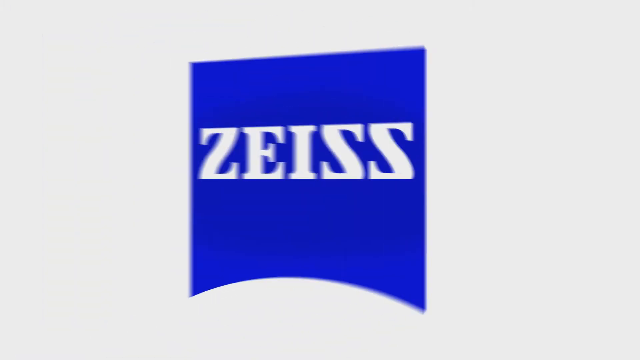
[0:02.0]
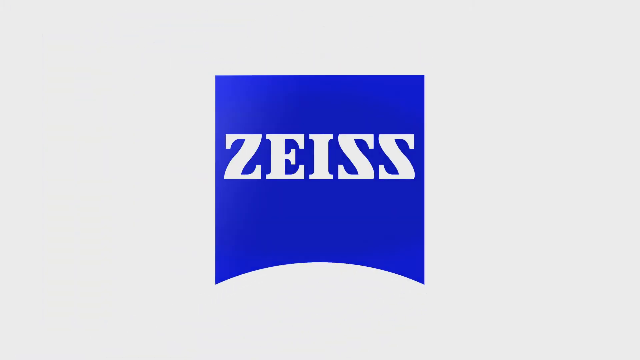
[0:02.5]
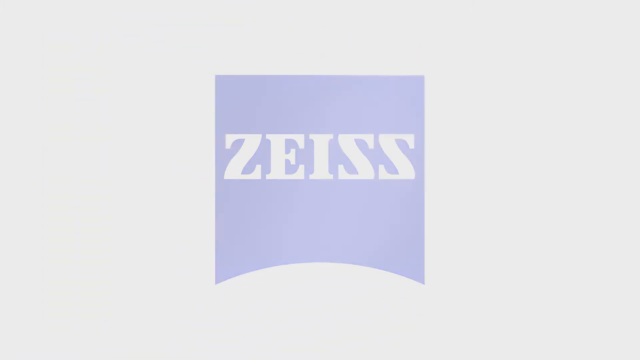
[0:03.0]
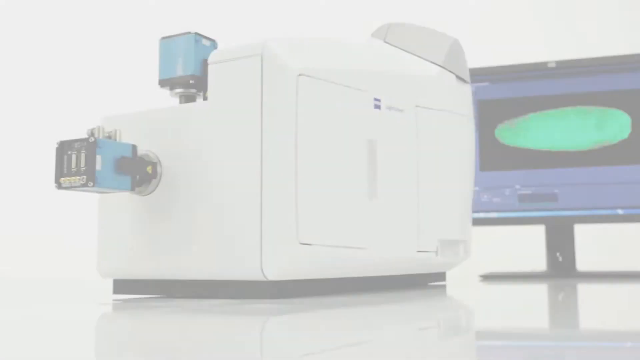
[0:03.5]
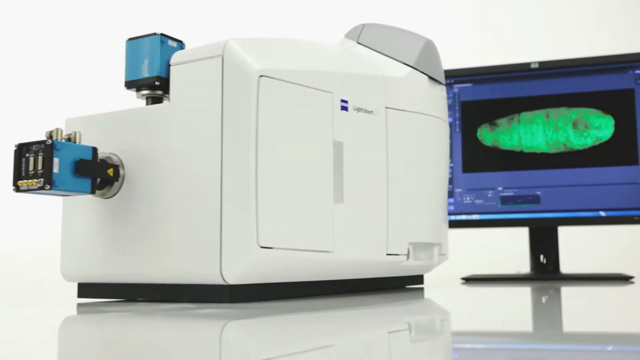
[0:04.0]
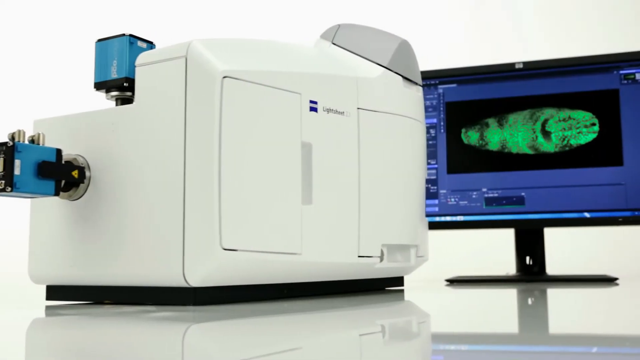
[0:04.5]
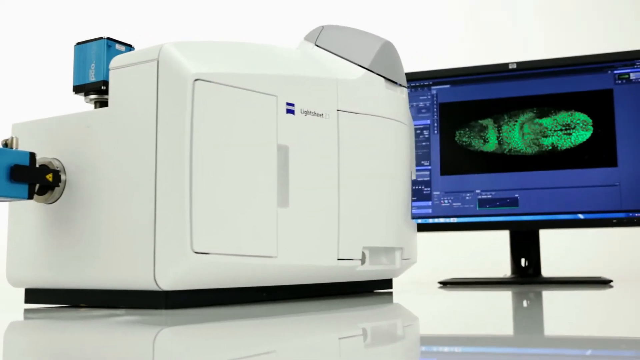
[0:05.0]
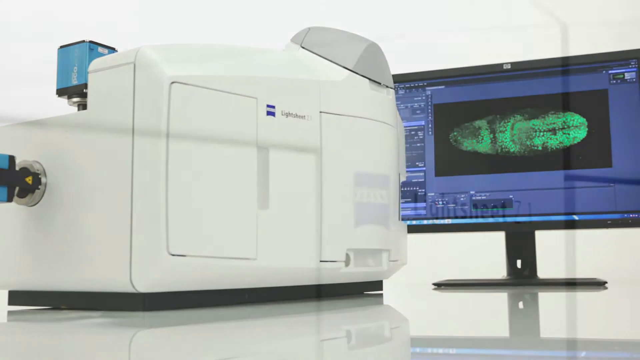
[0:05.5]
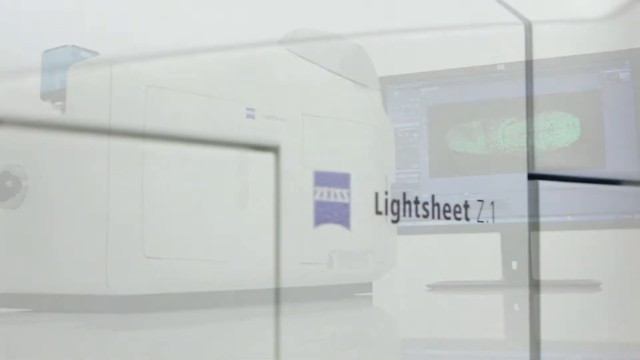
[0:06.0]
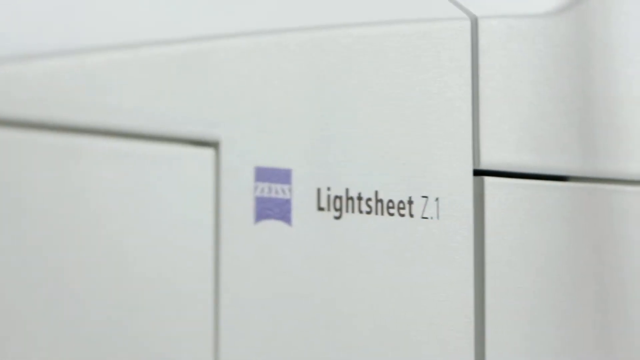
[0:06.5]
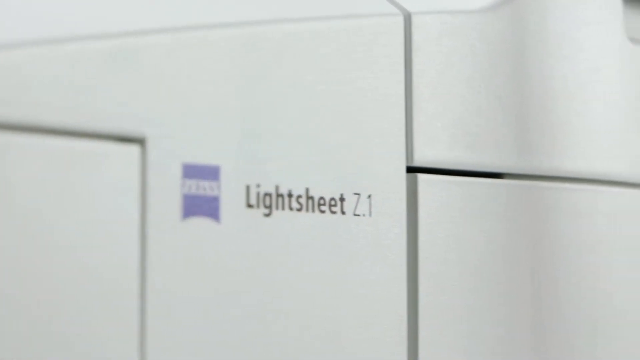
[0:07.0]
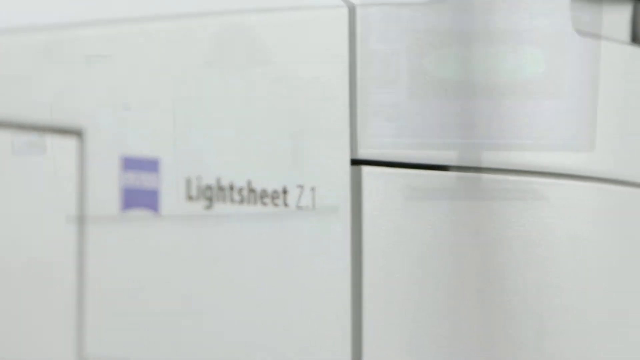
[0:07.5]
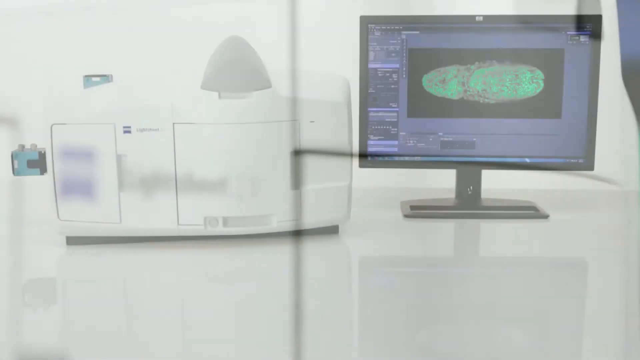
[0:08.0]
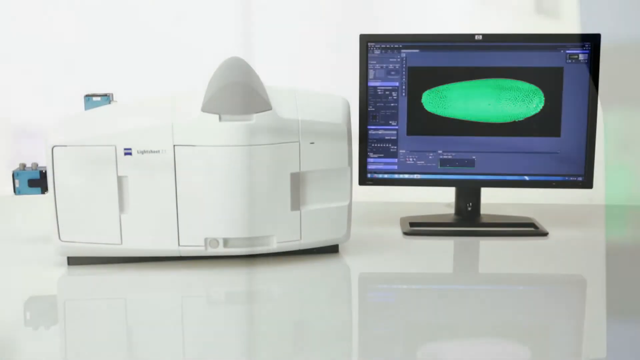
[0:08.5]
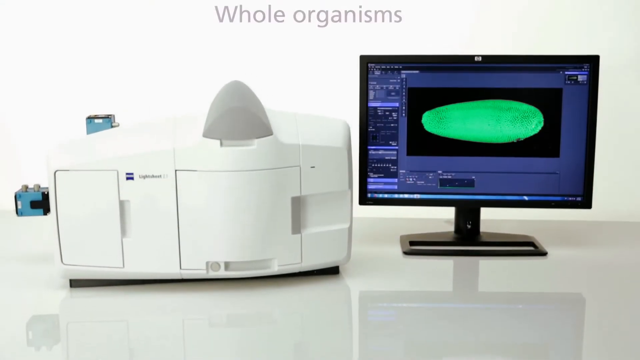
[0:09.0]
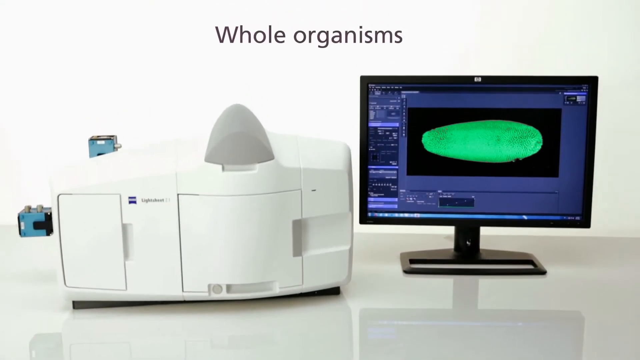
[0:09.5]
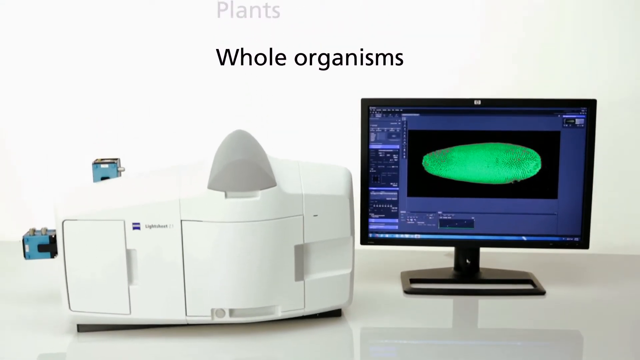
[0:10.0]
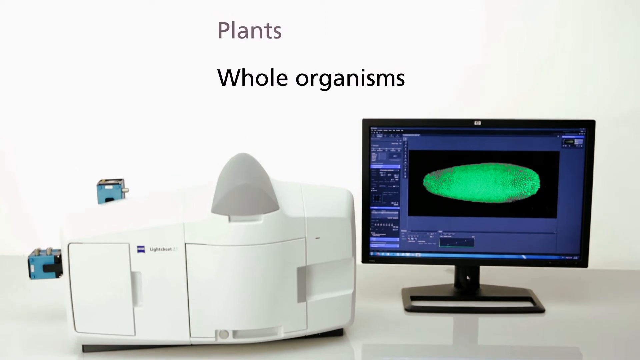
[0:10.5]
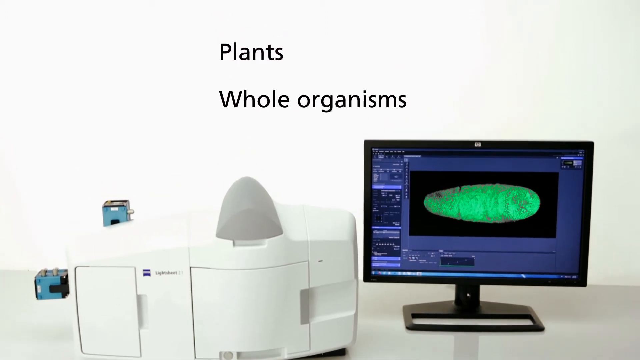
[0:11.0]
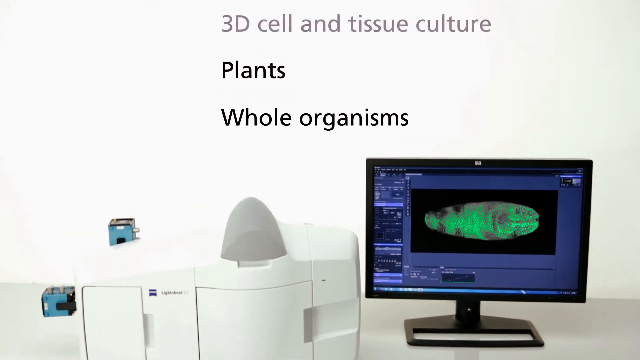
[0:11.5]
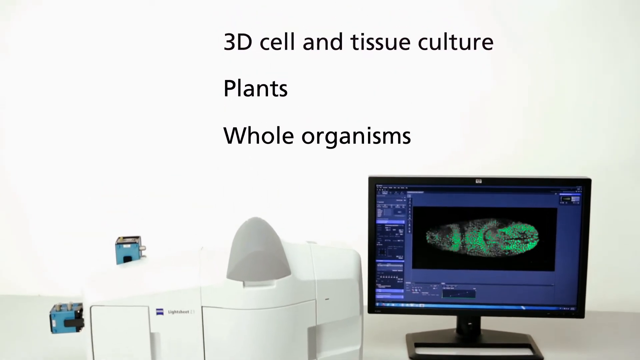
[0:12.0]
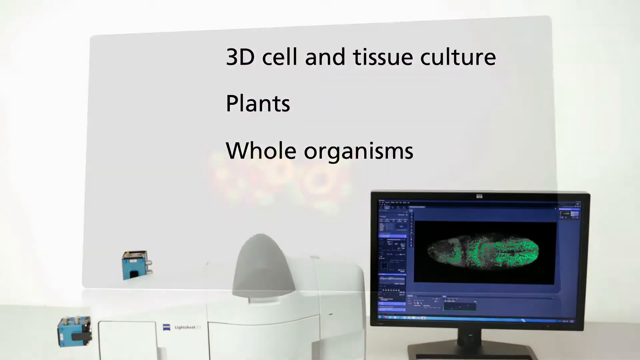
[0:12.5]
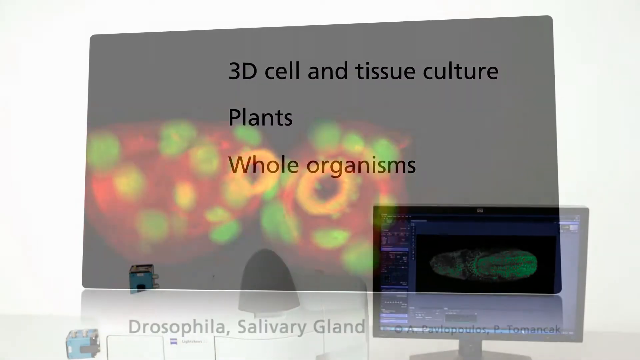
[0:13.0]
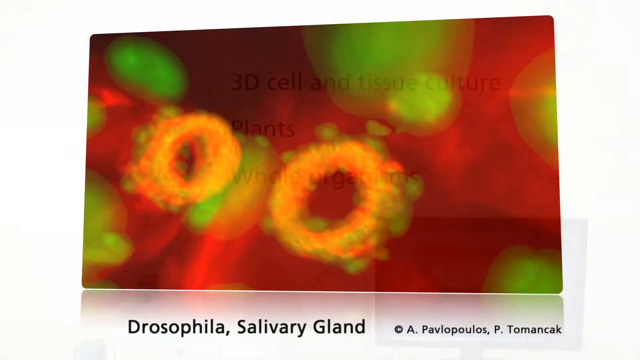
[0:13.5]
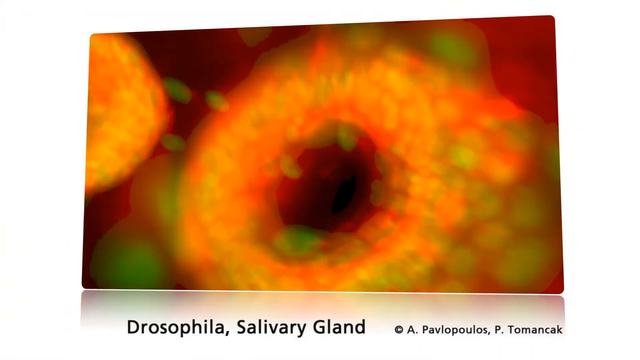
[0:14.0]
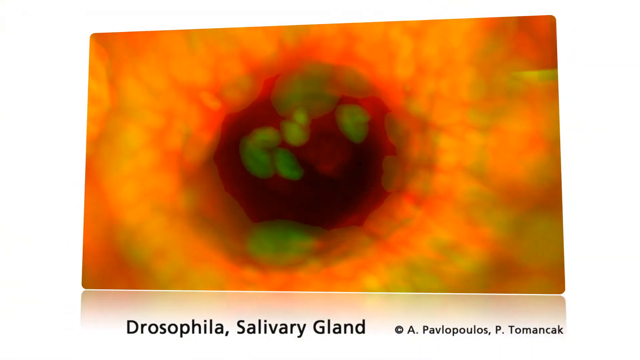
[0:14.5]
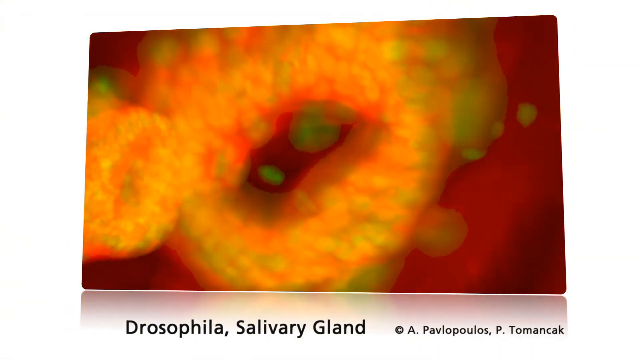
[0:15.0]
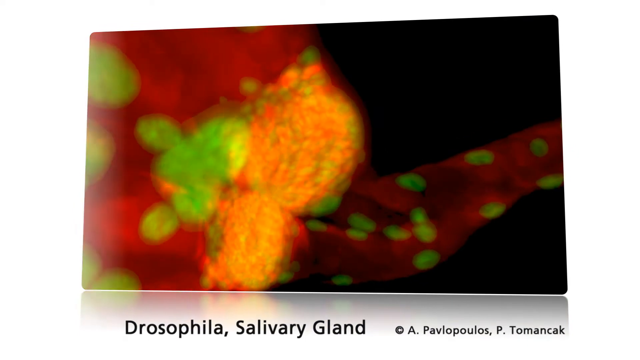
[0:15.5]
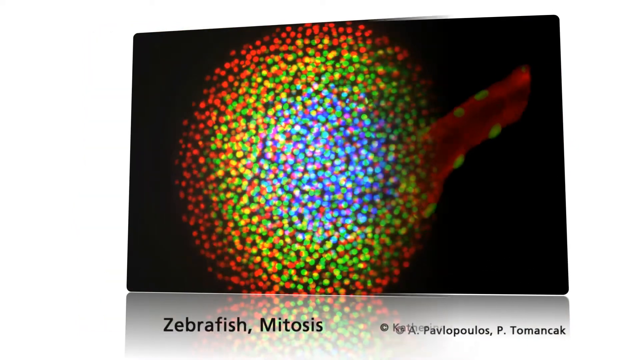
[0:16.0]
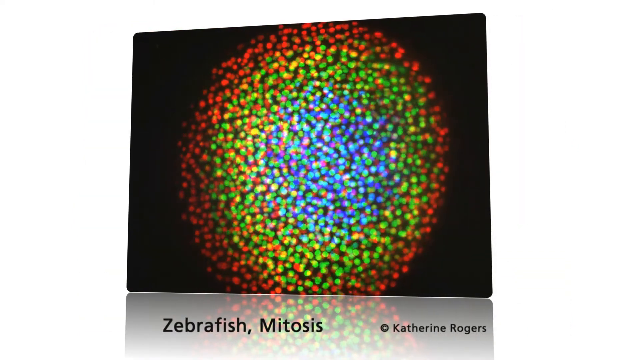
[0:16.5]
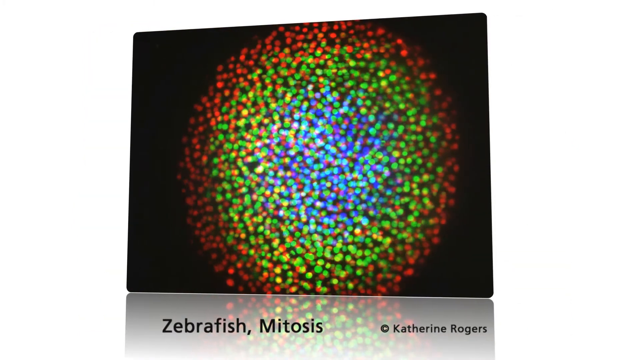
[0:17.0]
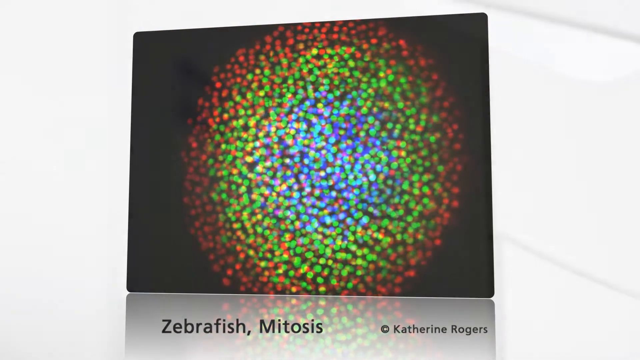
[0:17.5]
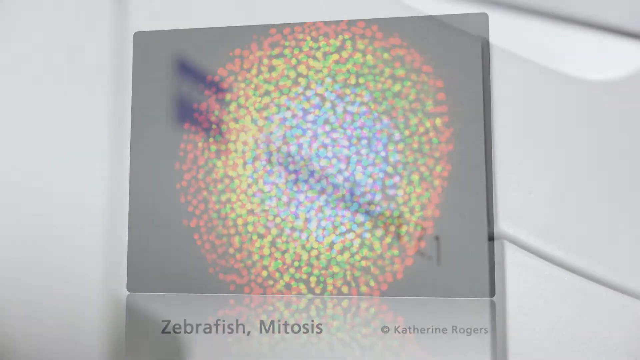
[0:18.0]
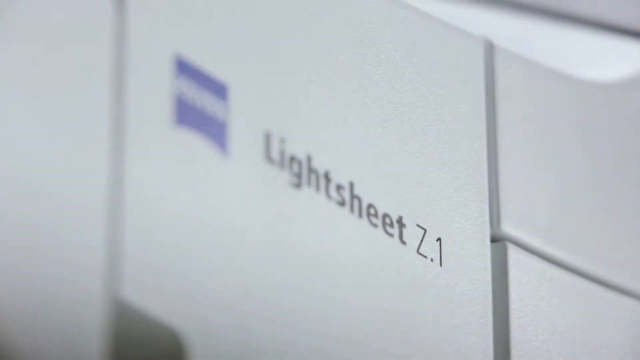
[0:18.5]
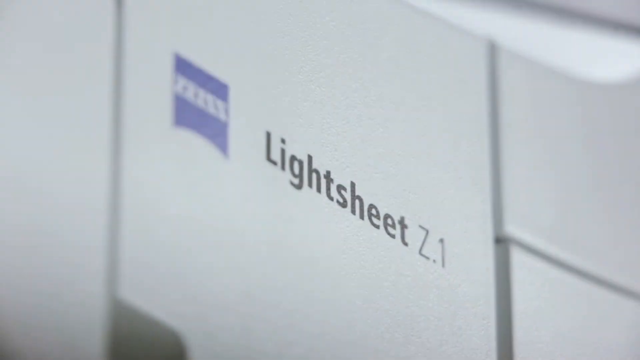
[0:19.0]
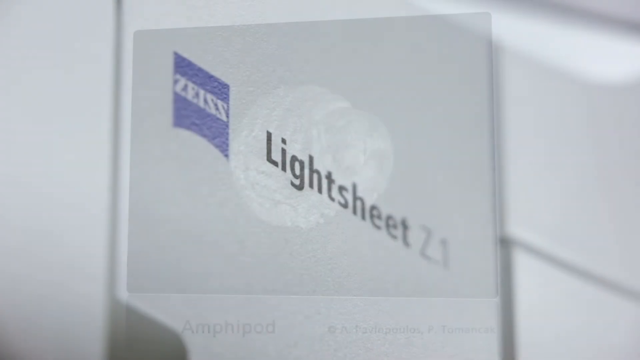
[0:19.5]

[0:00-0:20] The video opens on a grey, greyish-white screen. A logo enters from the left and moves to the center: a royal blue banner with white text in the middle reading "ZEISS". A gloss comes over the center of it, then it disappears. Next, a computer monitor is on the right, and on the left is a large rectangular device of some sort. It has two square slots in the front that look like they can be removed. On its left is a blue rectangular piece that is kind of hanging off the side; it almost looks connected but kind of hangs off. Another piece on the top is kind of hanging up. The device looks like some kind of computer equipment, possibly a large printer of some sort. The camera pans to the right, then the view transitions to a zoomed-in view of the device, where text reads "Light sheet Z.1" with the same purple or blue logo to the left of it. The camera continues panning right, then the angle shifts to directly in front of the device and pans upward. At the top of the screen it reads "Whole Organisms", and as the camera goes higher, the words "Plants" and "3D Cell and Tissue Culture" appear. The video then moves to what look almost like cells, as seen under a microscope, orange and green, coming toward the viewer at a fast pace. They stop and the view zooms out a bit, showing hundreds of what look like these cells arranged in a circular form: red on the outside, green further inside, and blue at the center. They move out and in while staying in that circular pattern. Then a black screen shows a white and gray circular item.